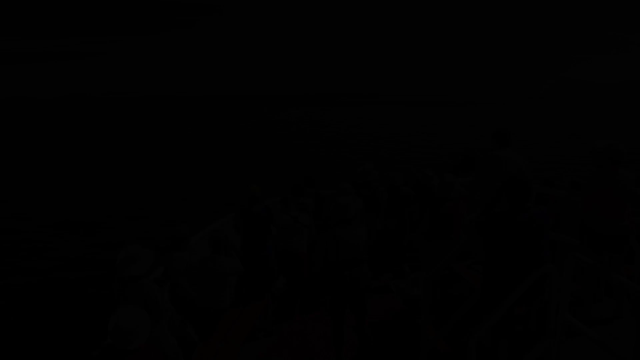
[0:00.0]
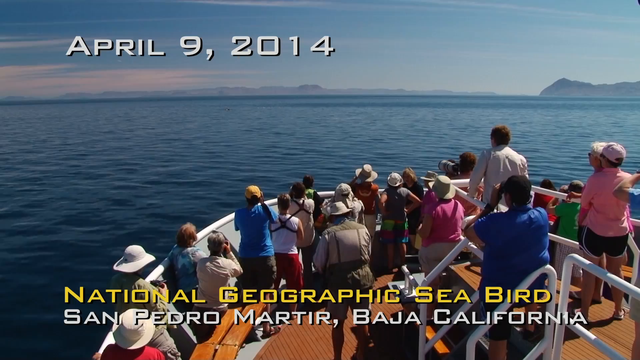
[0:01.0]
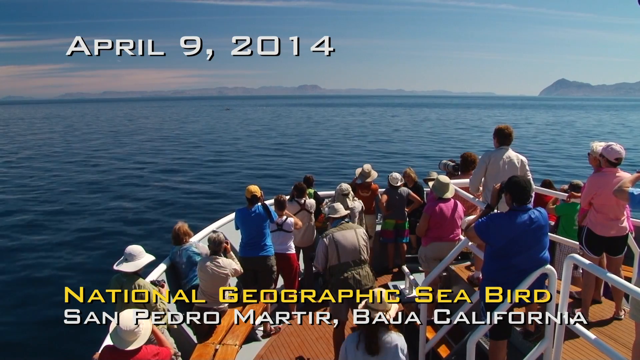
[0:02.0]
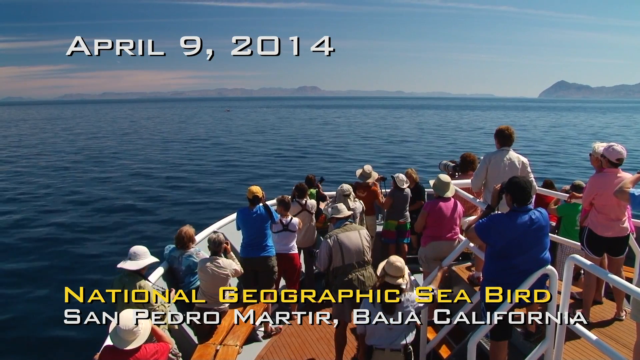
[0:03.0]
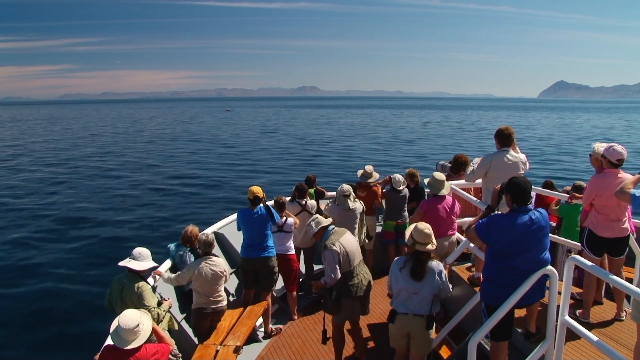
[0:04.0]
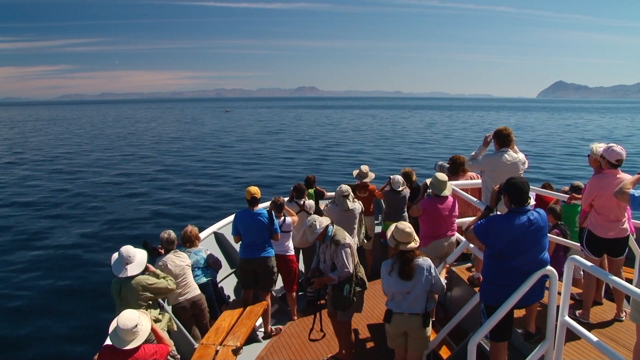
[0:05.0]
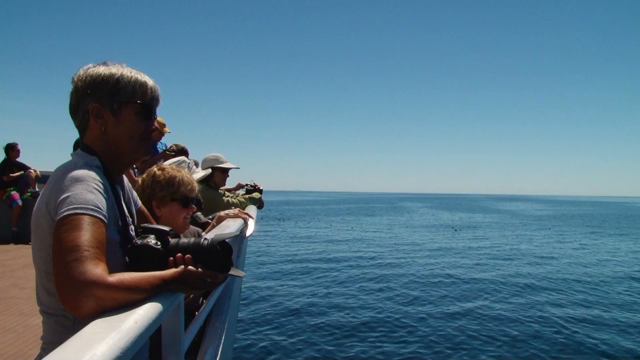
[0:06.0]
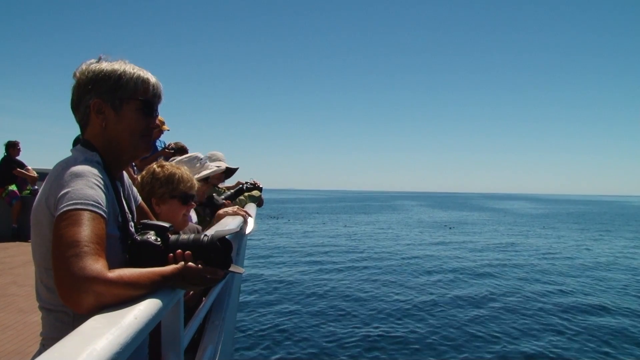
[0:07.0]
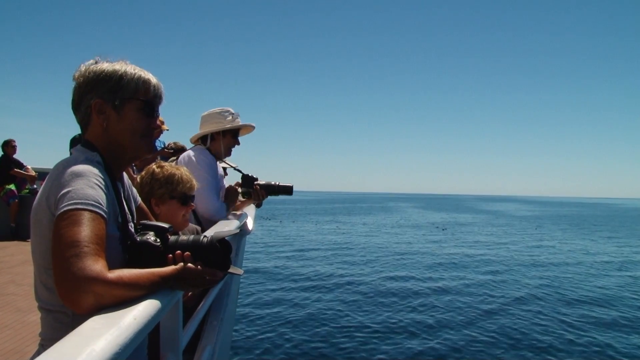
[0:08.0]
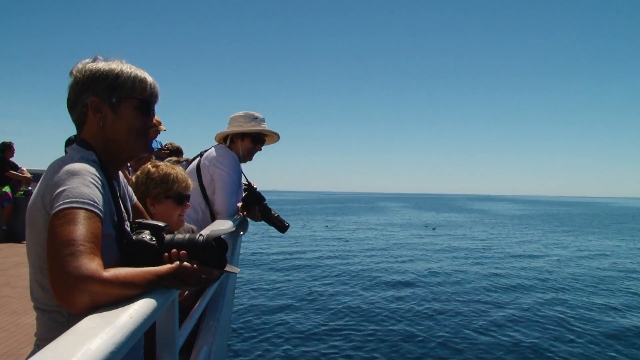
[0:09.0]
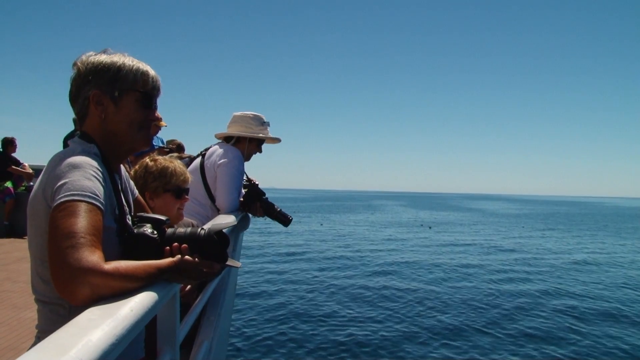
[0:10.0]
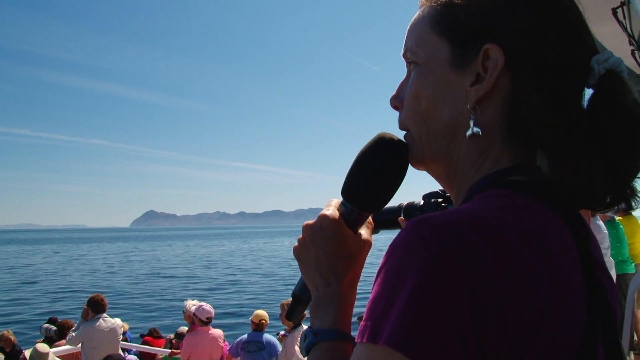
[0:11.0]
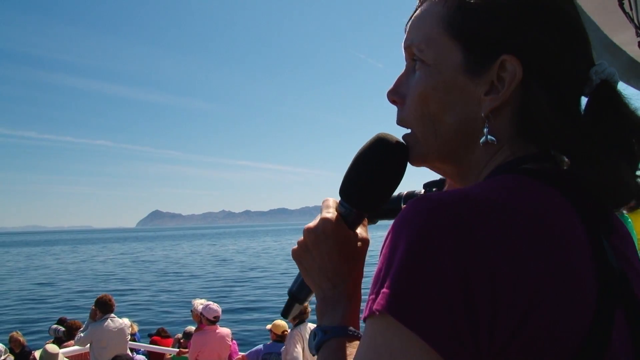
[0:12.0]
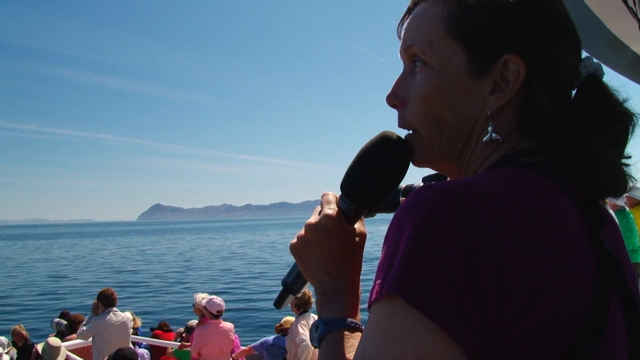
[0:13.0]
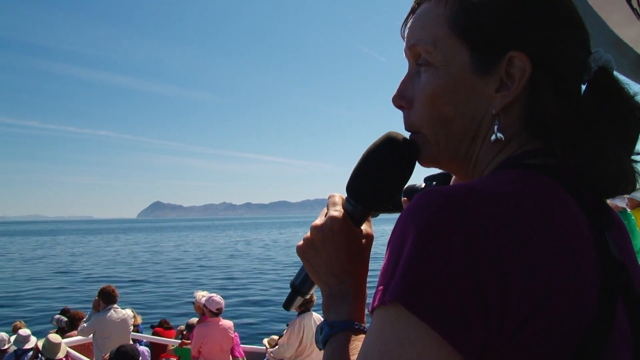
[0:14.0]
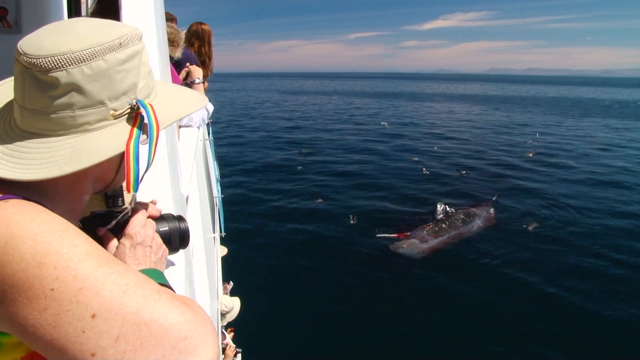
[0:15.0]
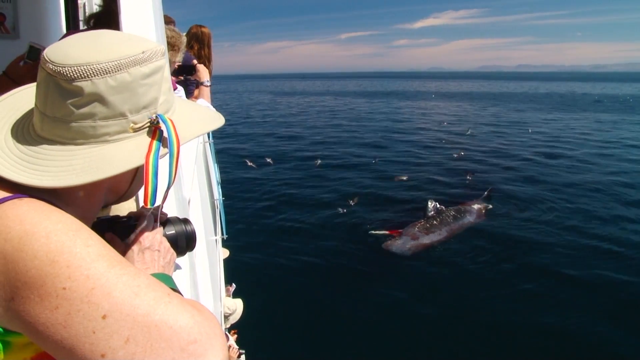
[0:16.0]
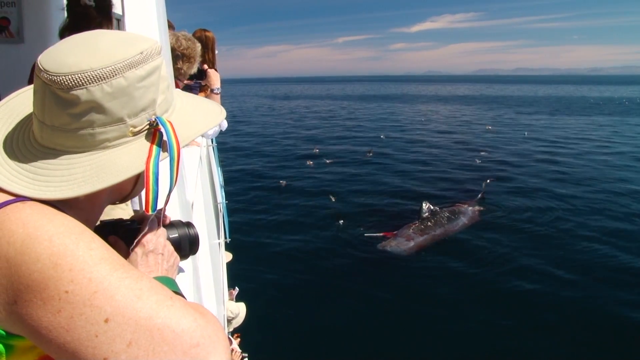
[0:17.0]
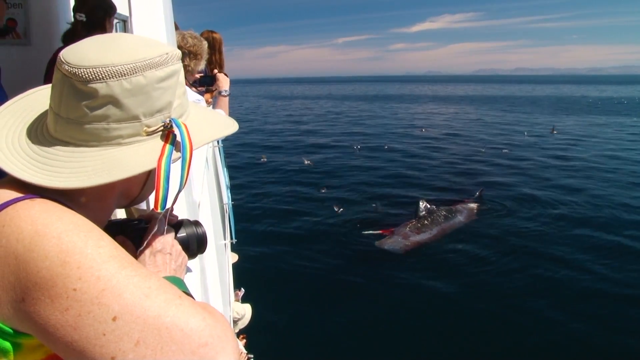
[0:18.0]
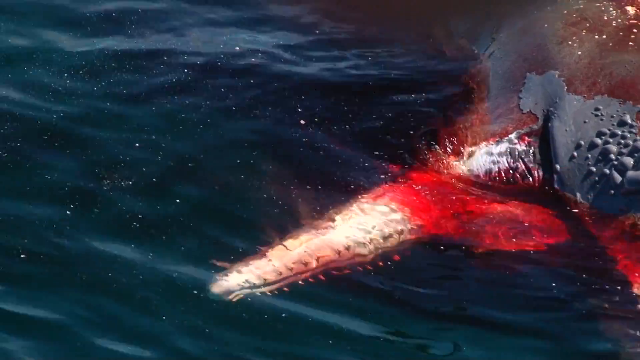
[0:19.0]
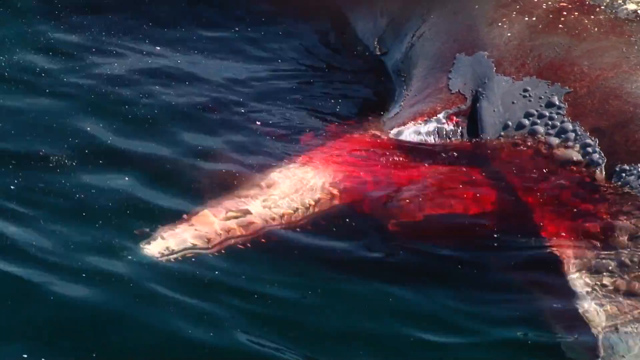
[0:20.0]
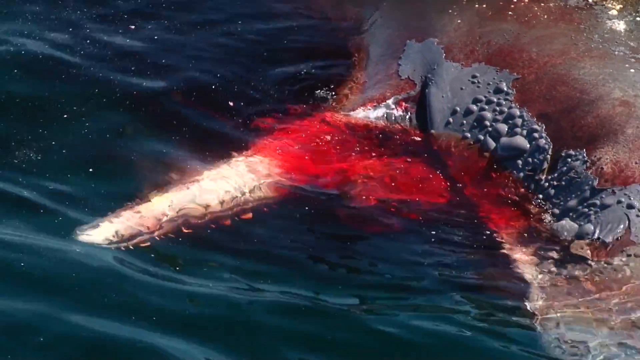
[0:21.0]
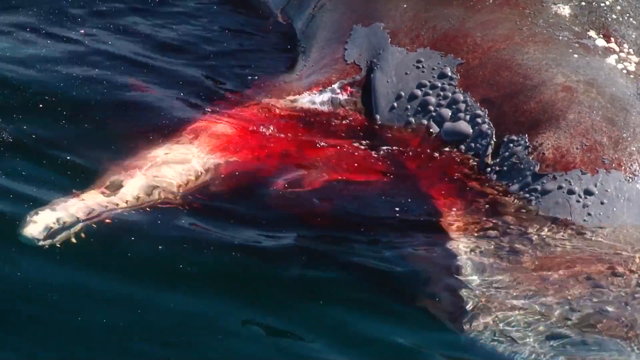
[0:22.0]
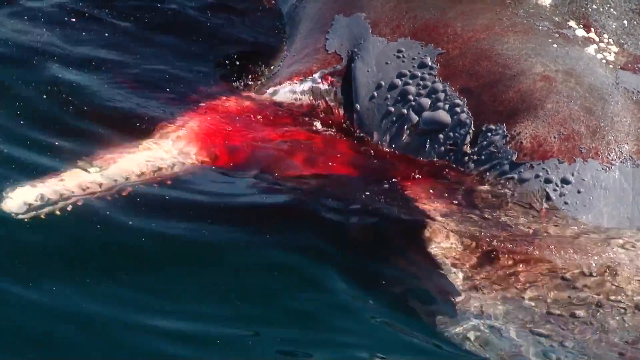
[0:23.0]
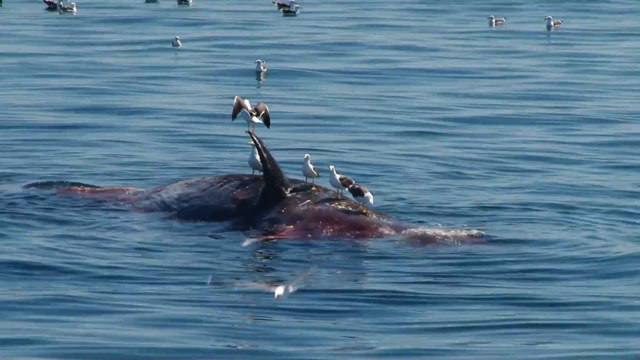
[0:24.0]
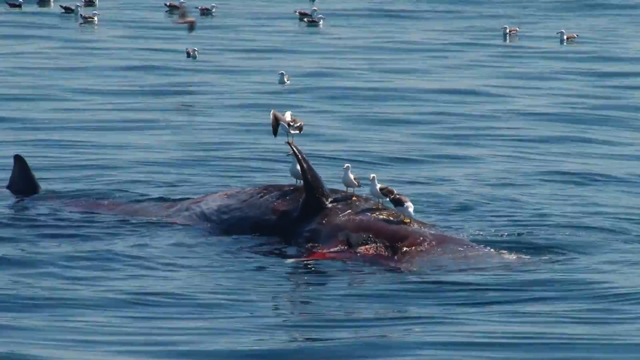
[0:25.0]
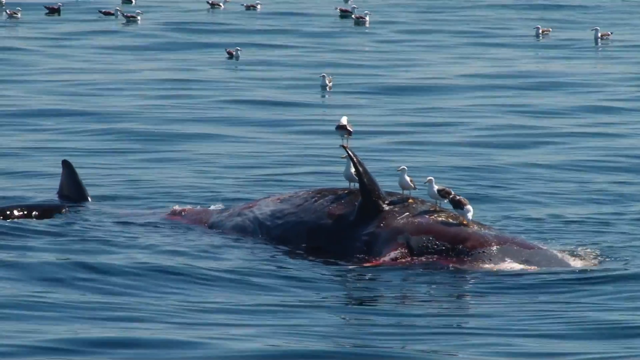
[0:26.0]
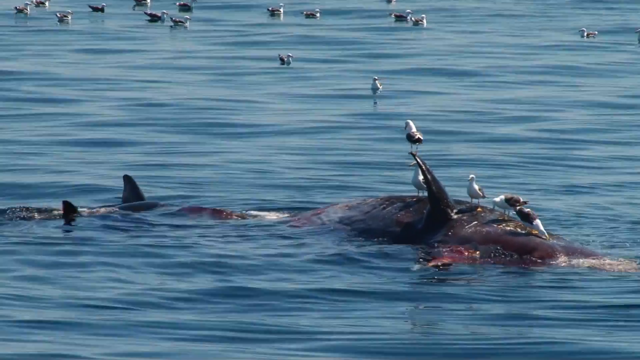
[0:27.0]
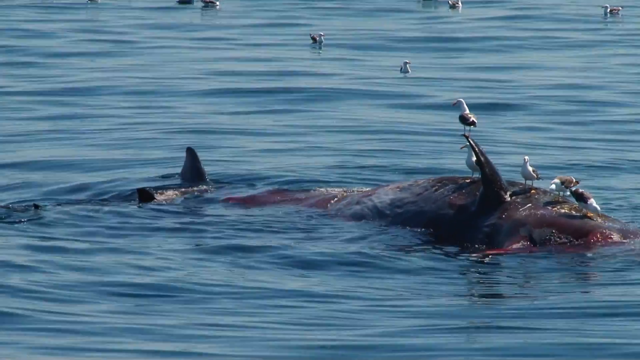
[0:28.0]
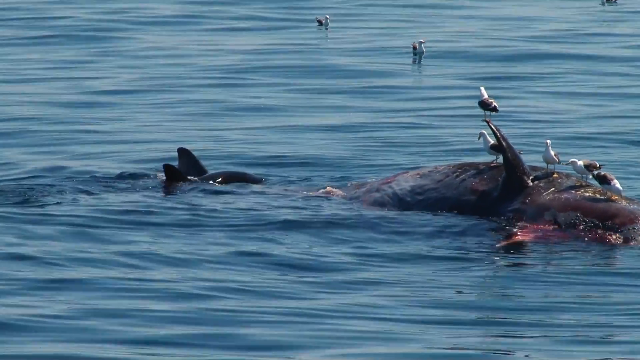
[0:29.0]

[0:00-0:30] A cruise ship leaves from San Pedro Martir, Baja California, on a National Geographic Seabird cruise. Many people on the boat hold cameras with long lenses, and one person on the boat wears a green shirt. The water comes into view. First something red appears, possibly a reflection or blood, along with some kind of scales on something. At first it looks like a starfish, but as the view opens up wider it appears to be a whale. Many birds are sitting on the whale, and many more birds are out on the water. The water looks very clean and a see-through blue. The people wear shorts and sun hats, suggesting warm weather; some have binoculars and others have long-lens cameras, and many of them seem to be elderly.